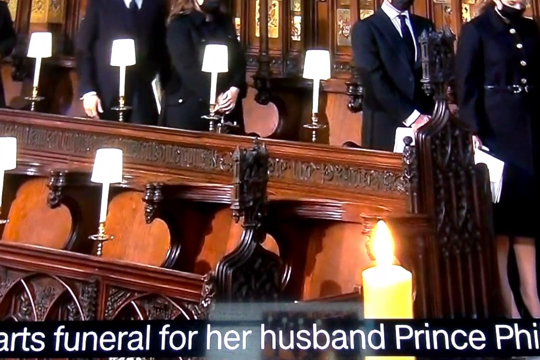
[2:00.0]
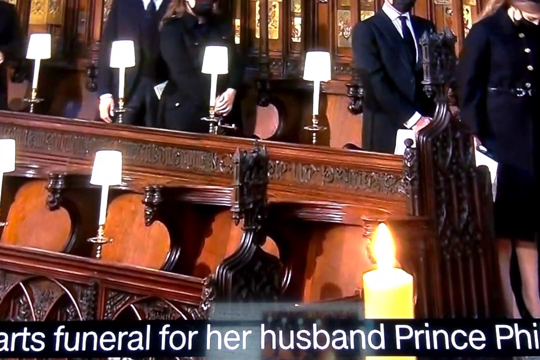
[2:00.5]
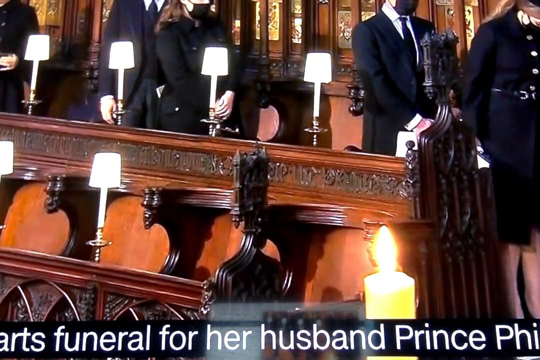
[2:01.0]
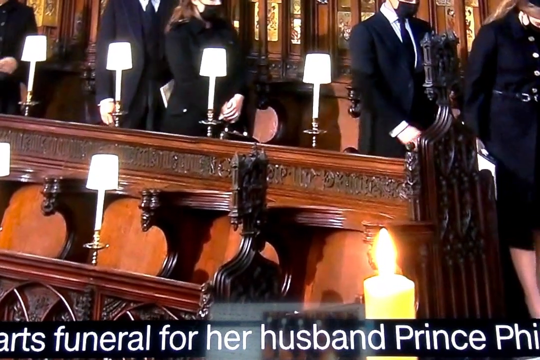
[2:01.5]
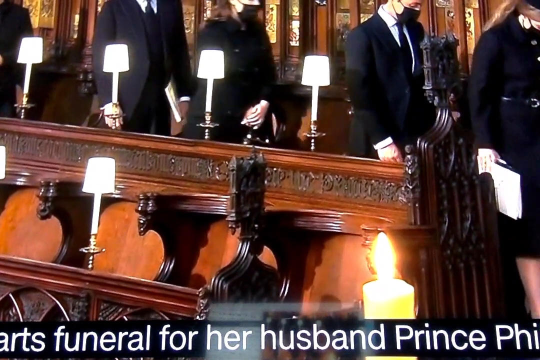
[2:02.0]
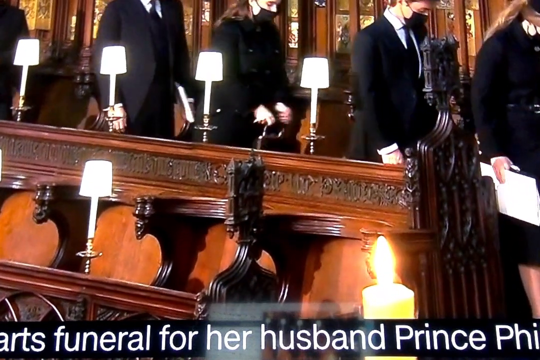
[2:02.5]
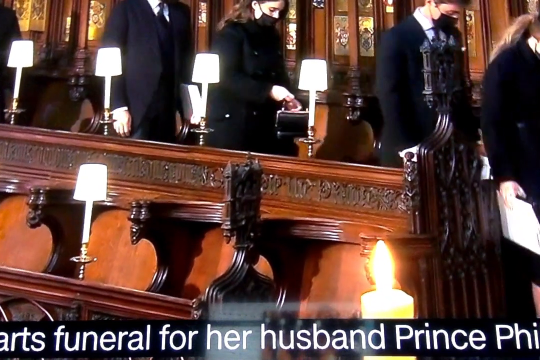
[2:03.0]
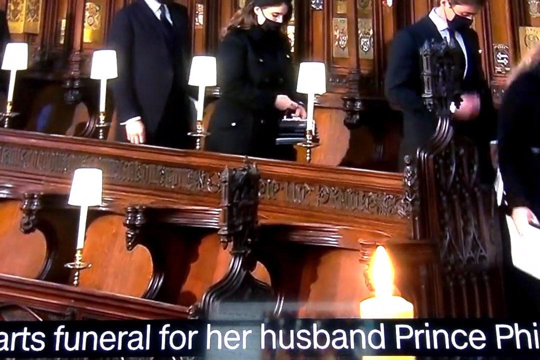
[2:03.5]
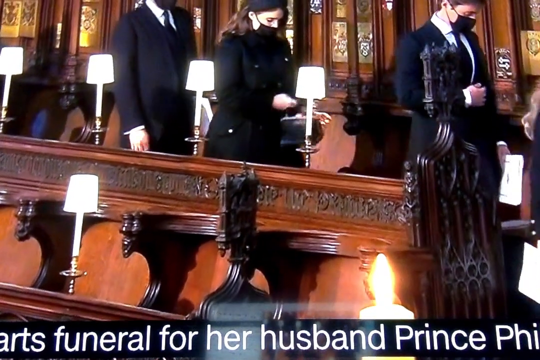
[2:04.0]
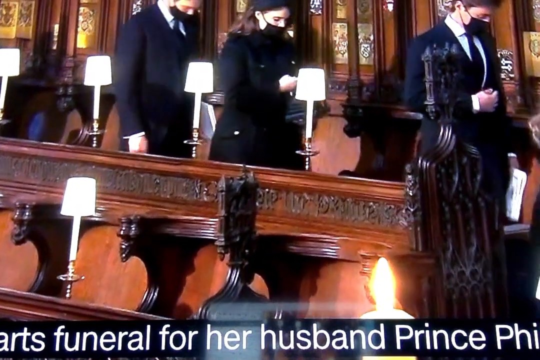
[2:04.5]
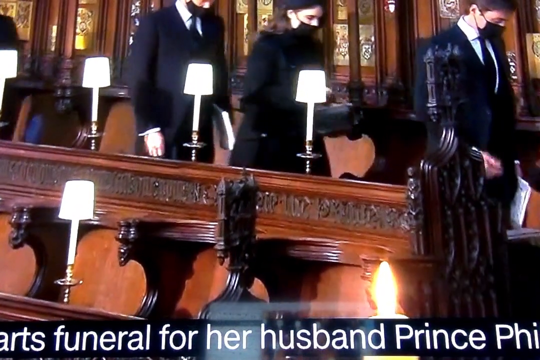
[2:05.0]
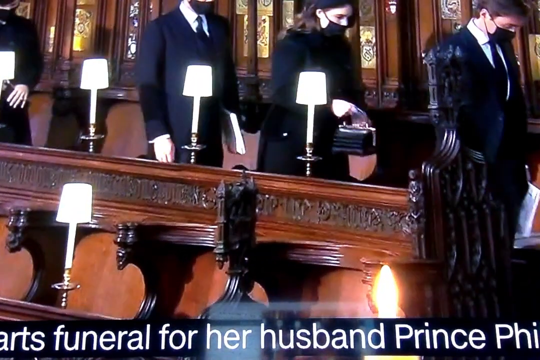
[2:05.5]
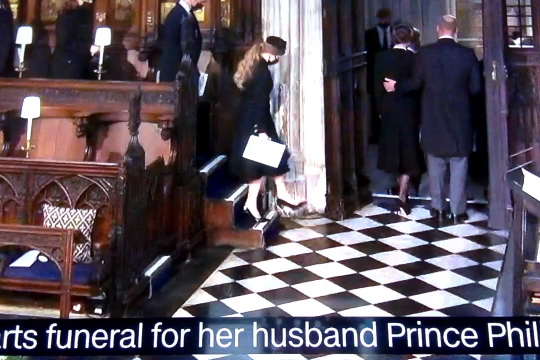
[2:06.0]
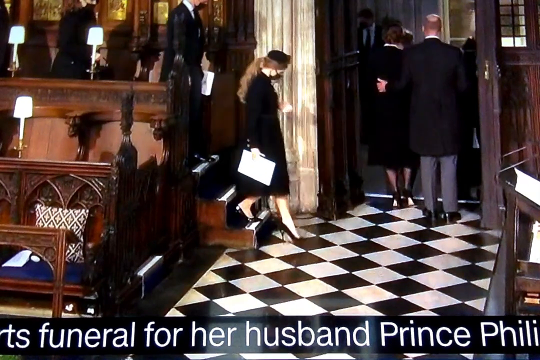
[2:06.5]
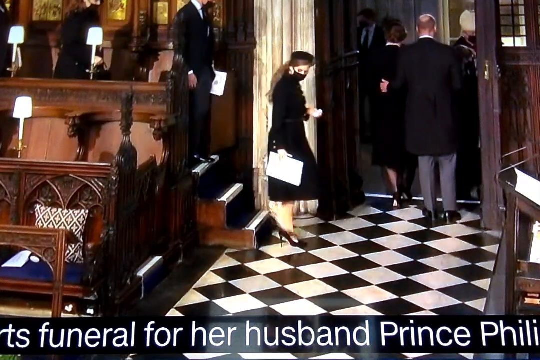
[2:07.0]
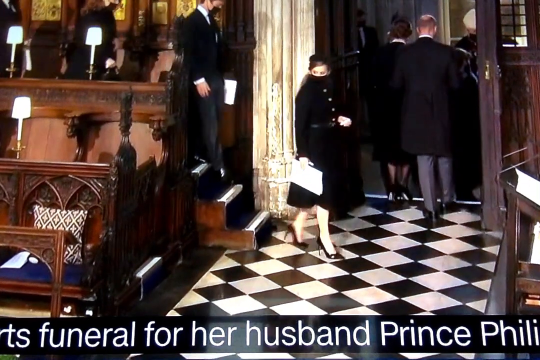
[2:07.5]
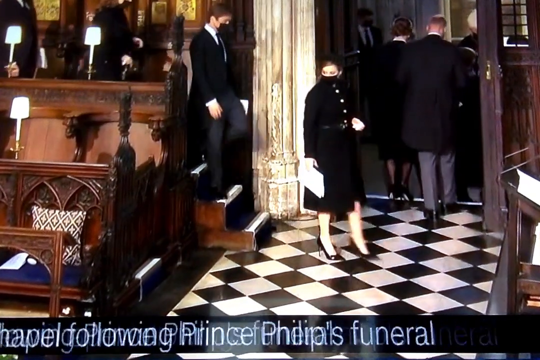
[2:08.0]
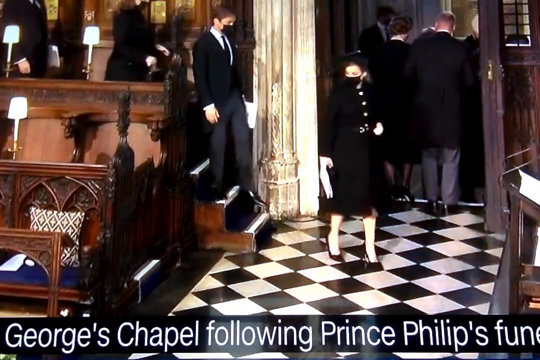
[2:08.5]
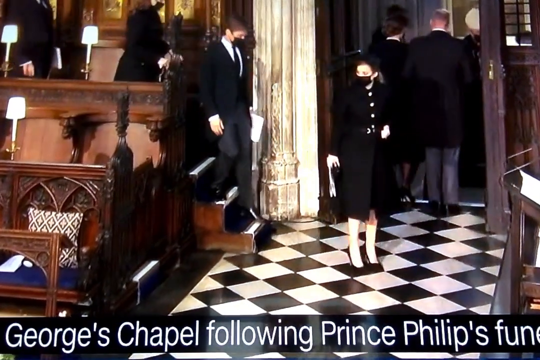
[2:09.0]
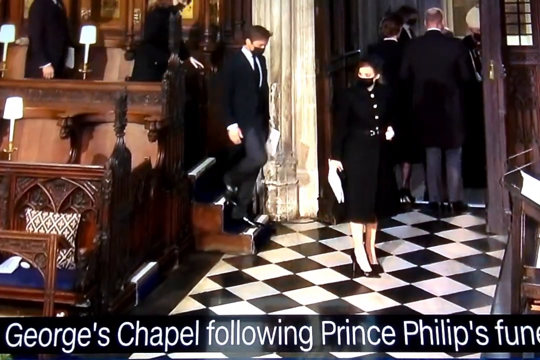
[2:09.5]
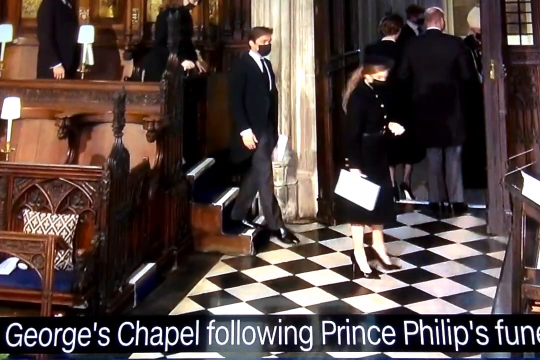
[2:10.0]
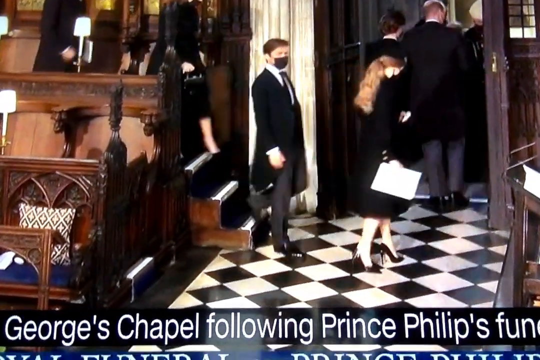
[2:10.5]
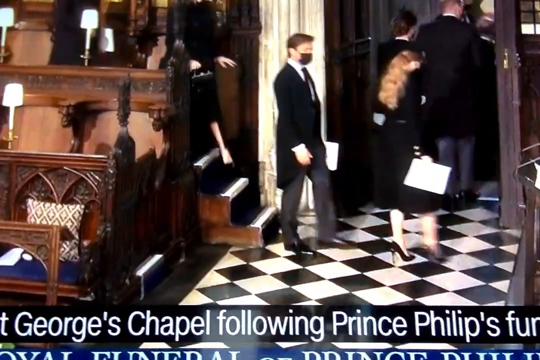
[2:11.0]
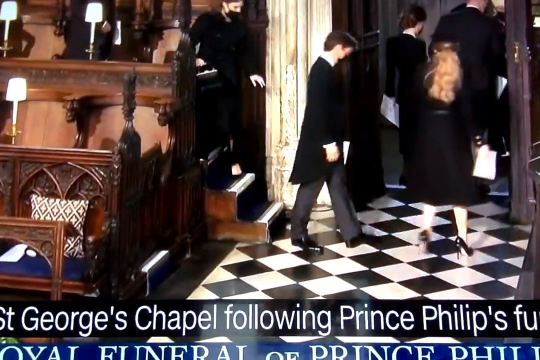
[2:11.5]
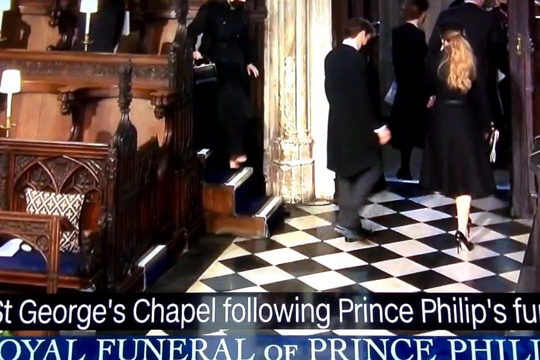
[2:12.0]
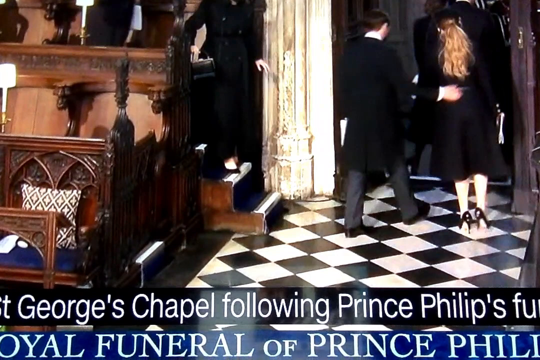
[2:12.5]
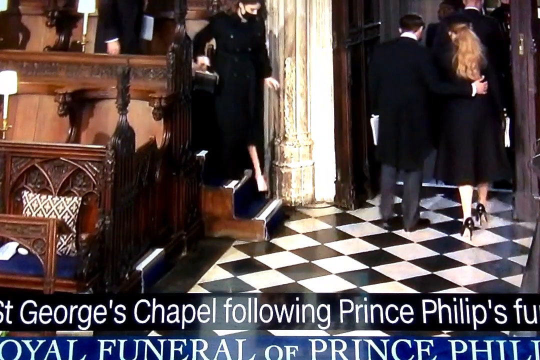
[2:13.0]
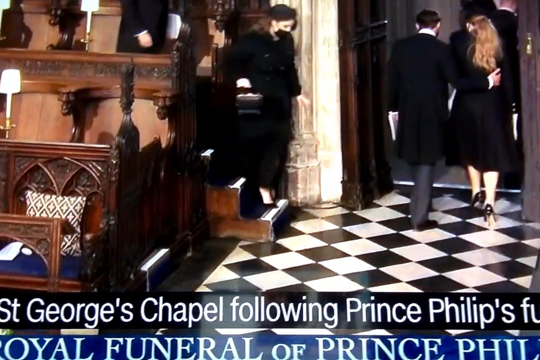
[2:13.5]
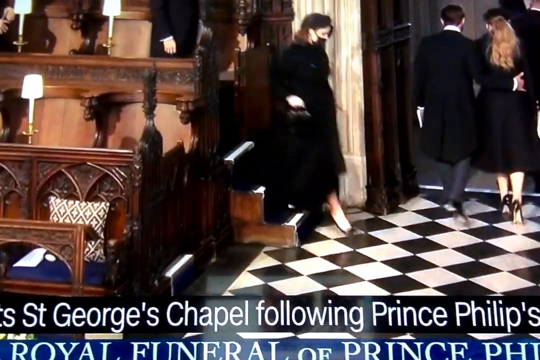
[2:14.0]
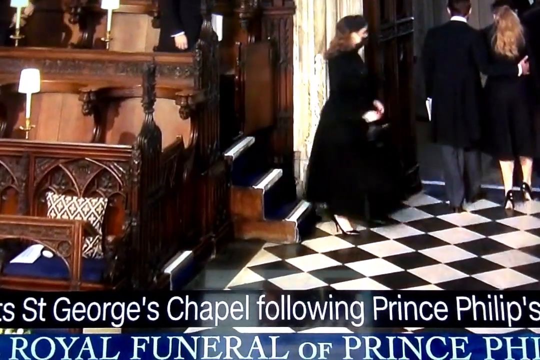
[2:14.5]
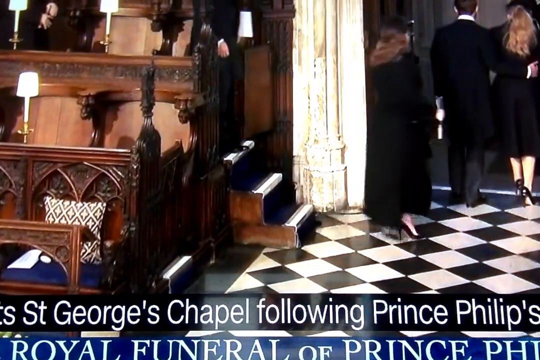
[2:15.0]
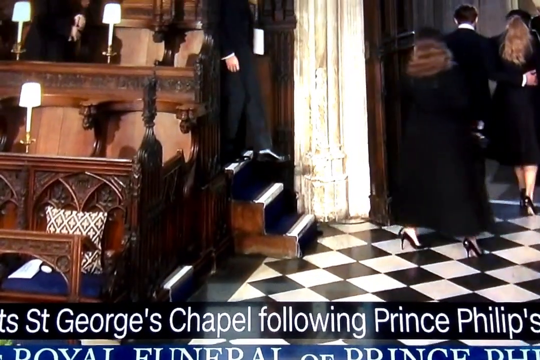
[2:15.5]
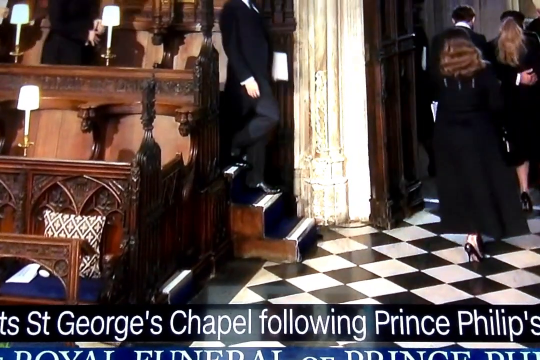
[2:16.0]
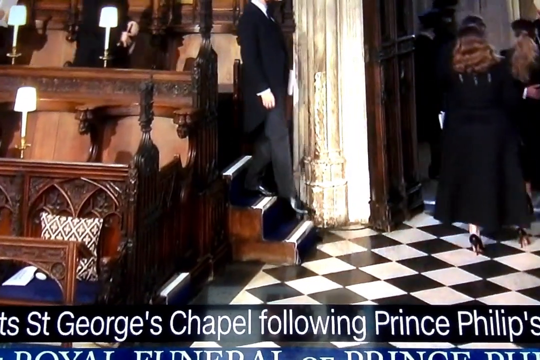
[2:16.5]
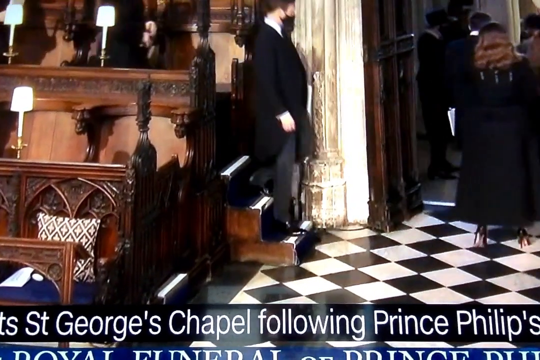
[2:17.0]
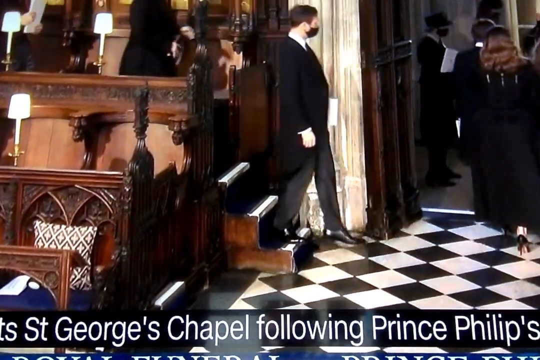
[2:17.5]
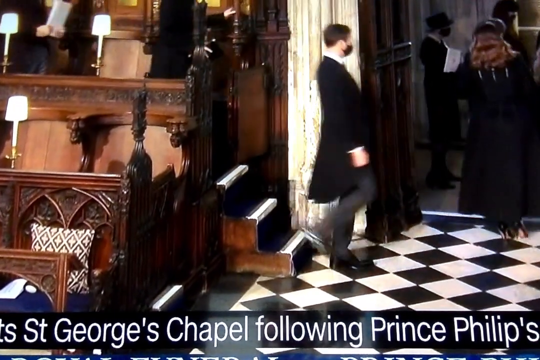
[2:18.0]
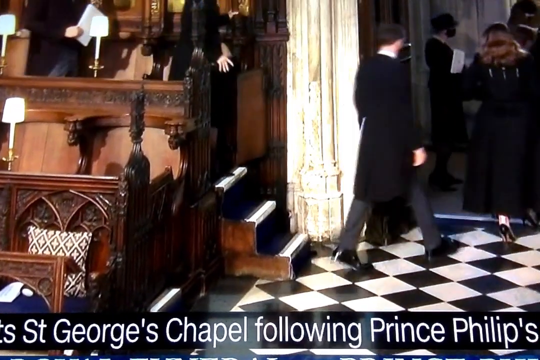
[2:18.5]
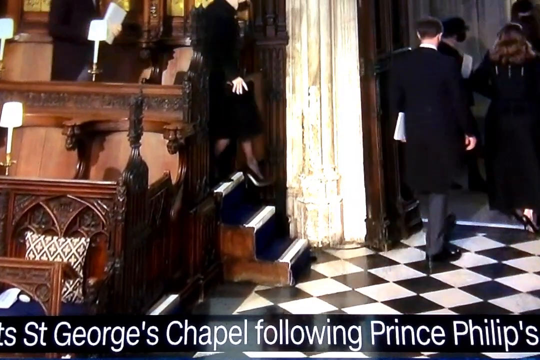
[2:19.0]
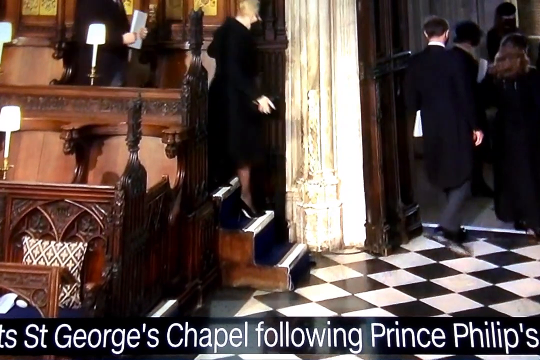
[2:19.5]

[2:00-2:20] People walk from the aisle of what look like wooden benches, all dressed in black and wearing black masks. On the railing are a whole bunch of lamps that are turned on. The people walk in a single file towards the front of the stage, where there are wooden steps, and walk down them slowly; they then seem to all turn to the left and exit the building. Text at the bottom of the screen indicates that the building is a chapel. The floor is checkered with black and white tiles. In the forefront is a burning yellow candle with a flame of a somewhat orange color.